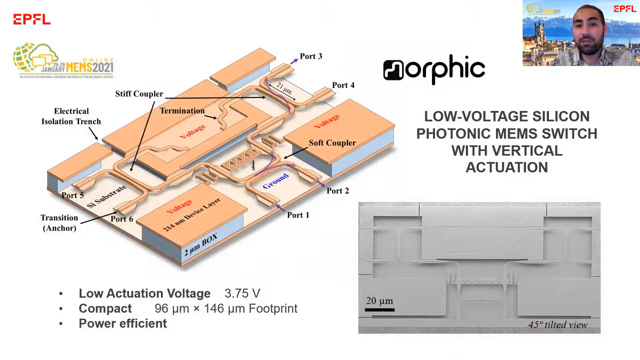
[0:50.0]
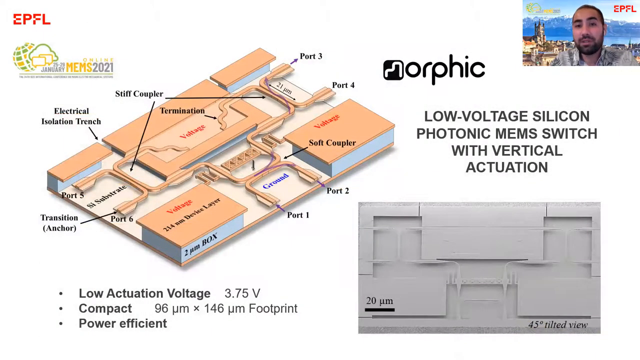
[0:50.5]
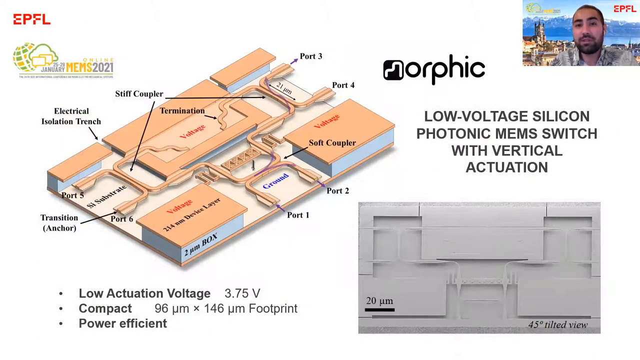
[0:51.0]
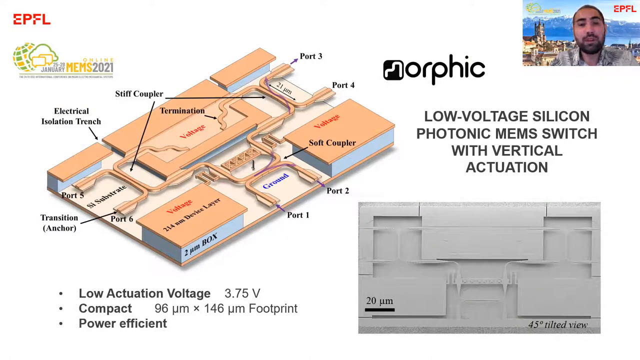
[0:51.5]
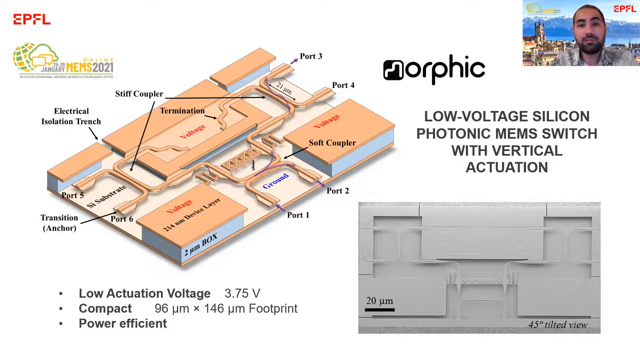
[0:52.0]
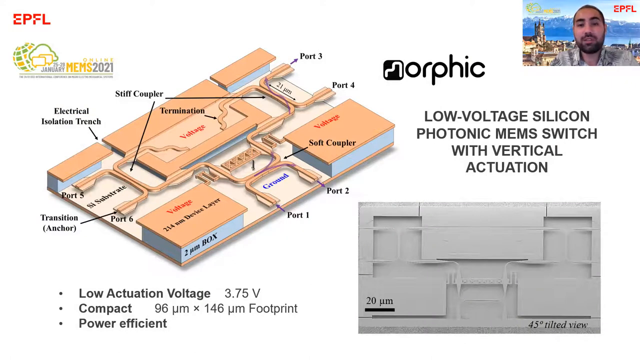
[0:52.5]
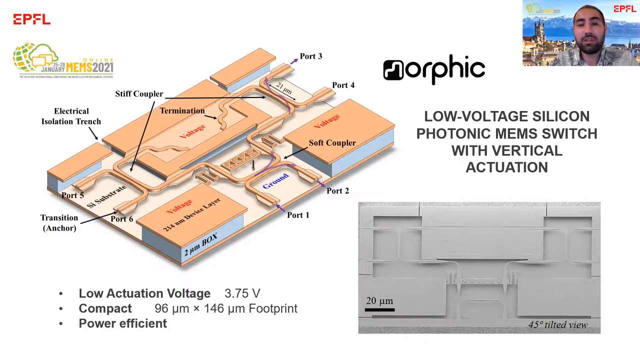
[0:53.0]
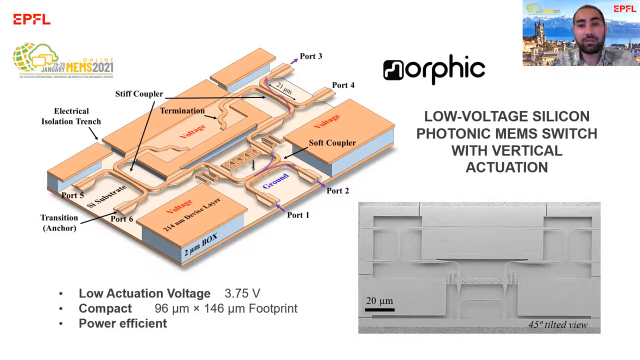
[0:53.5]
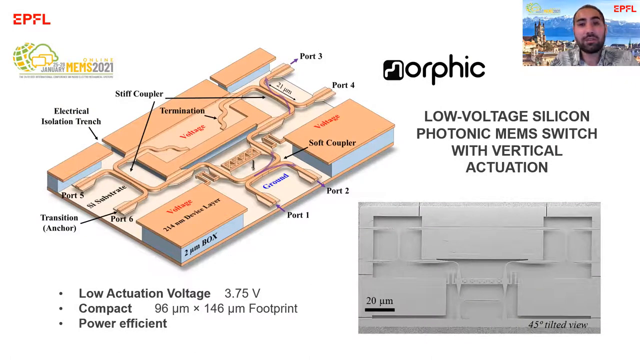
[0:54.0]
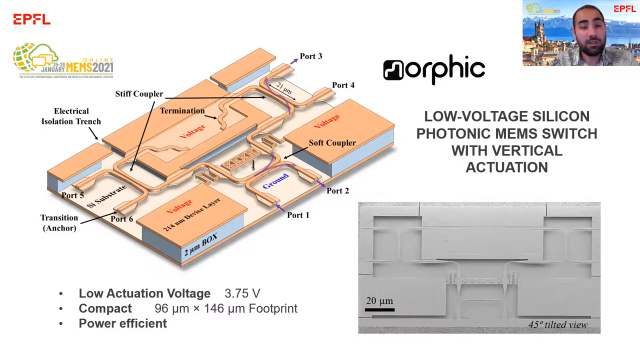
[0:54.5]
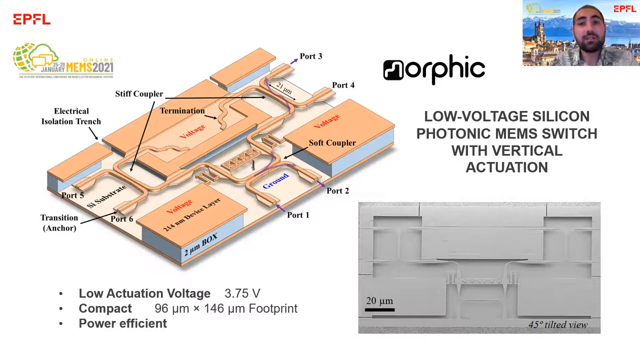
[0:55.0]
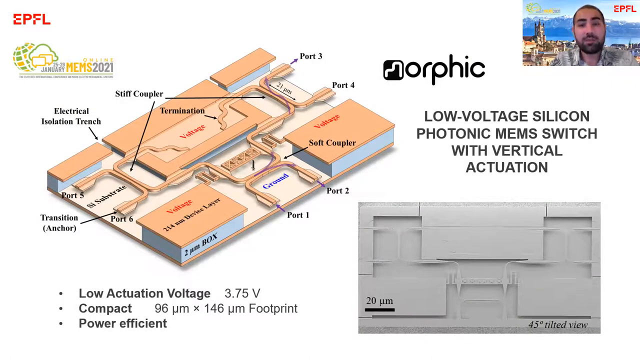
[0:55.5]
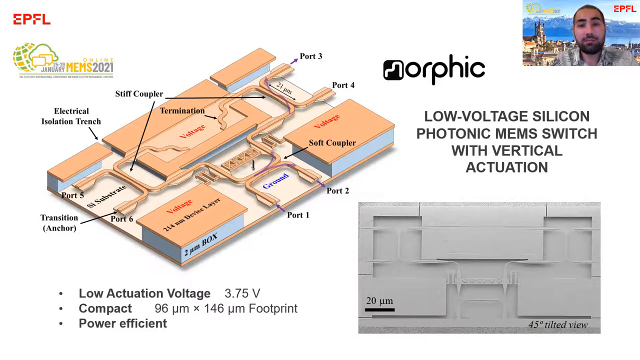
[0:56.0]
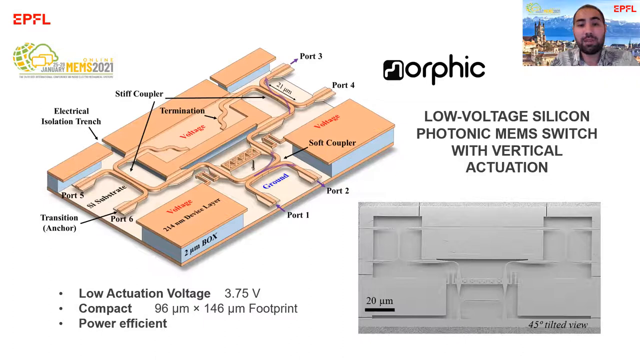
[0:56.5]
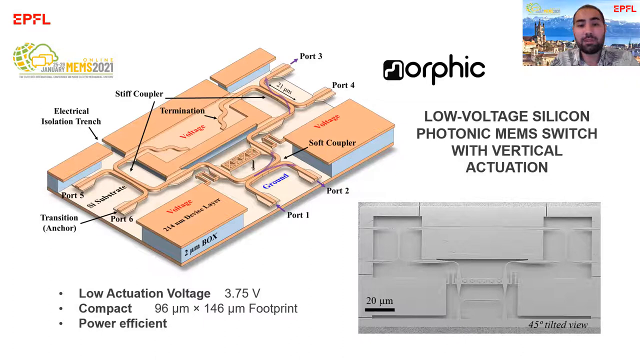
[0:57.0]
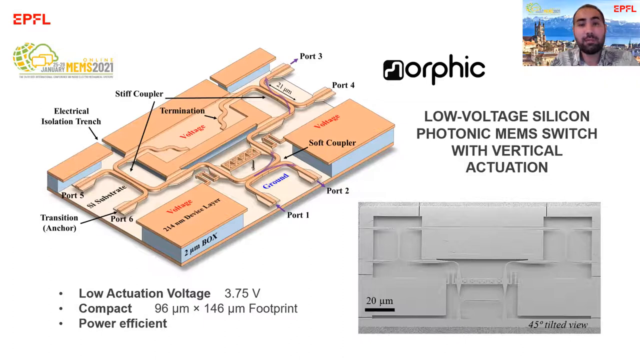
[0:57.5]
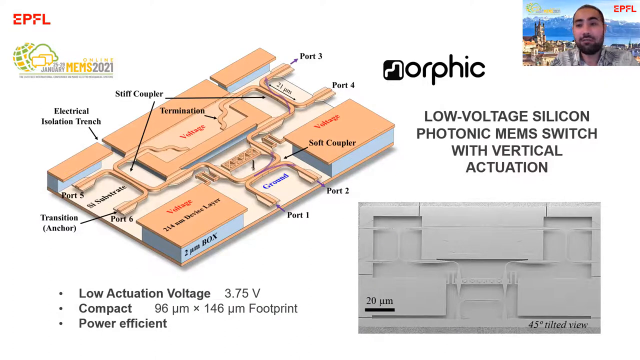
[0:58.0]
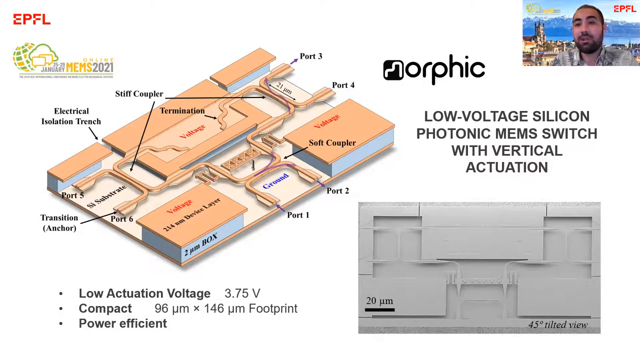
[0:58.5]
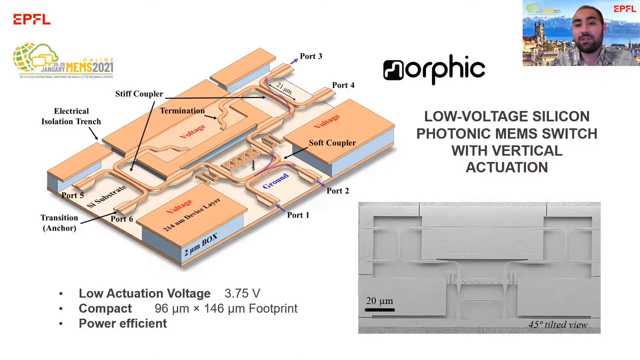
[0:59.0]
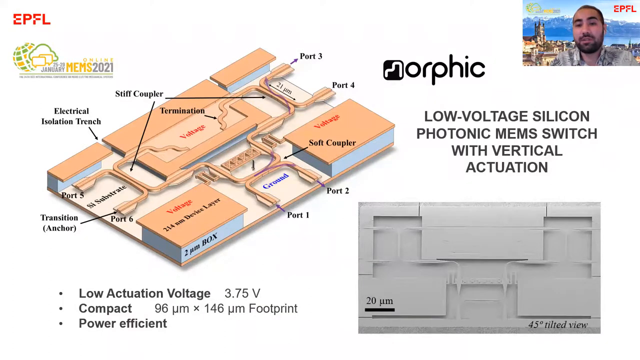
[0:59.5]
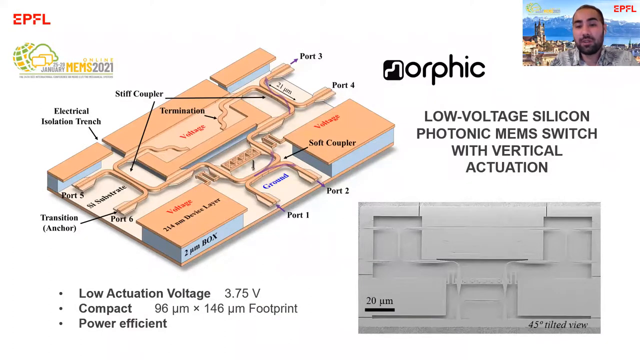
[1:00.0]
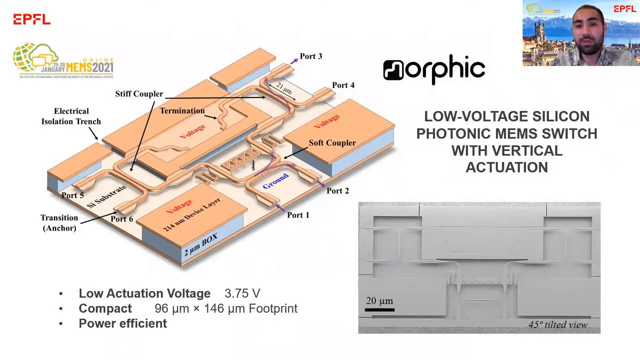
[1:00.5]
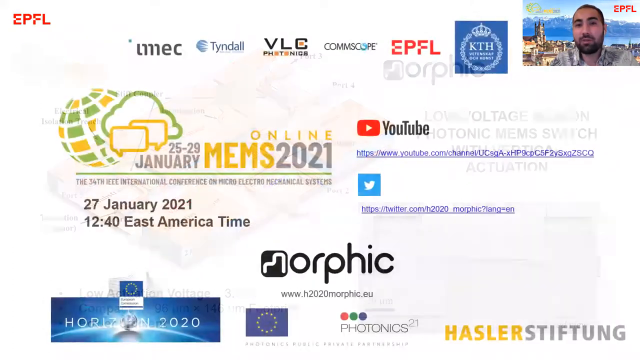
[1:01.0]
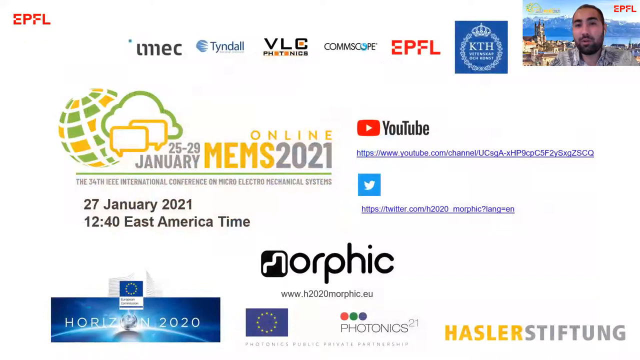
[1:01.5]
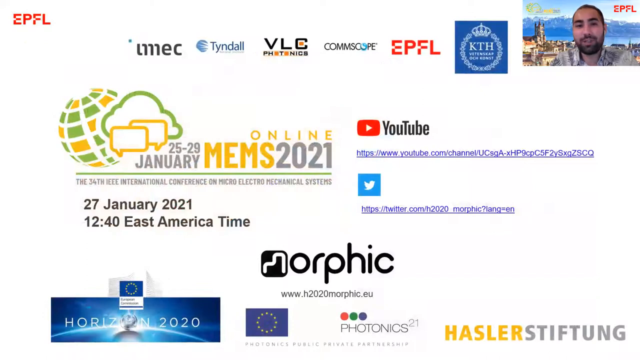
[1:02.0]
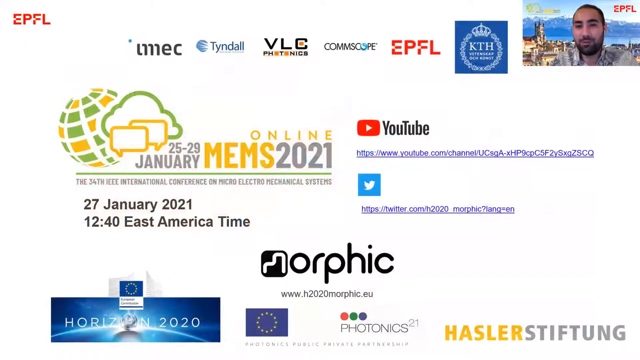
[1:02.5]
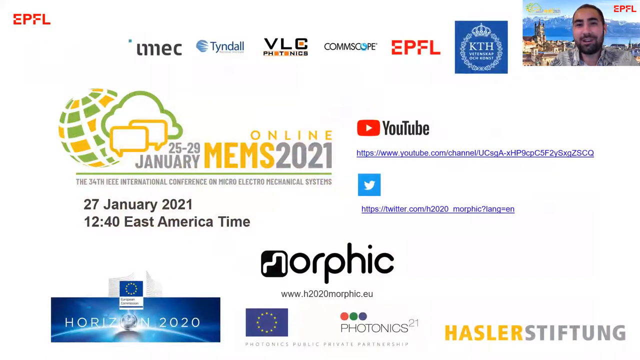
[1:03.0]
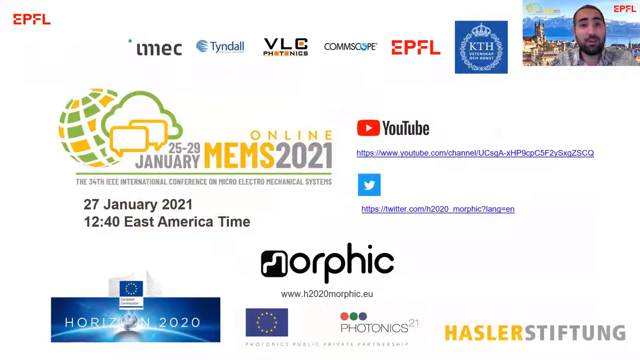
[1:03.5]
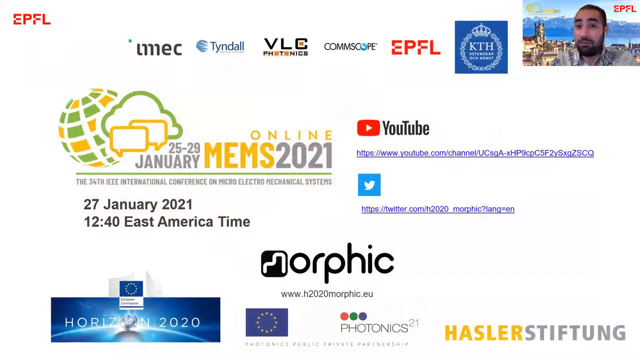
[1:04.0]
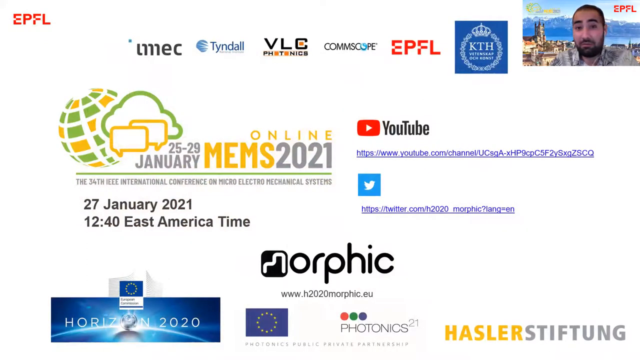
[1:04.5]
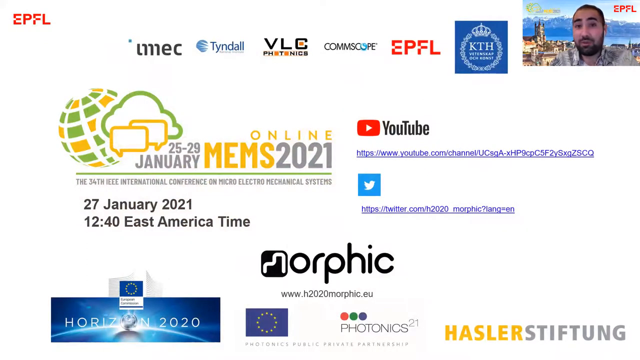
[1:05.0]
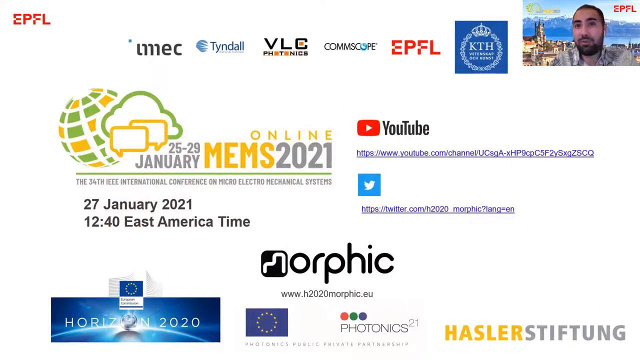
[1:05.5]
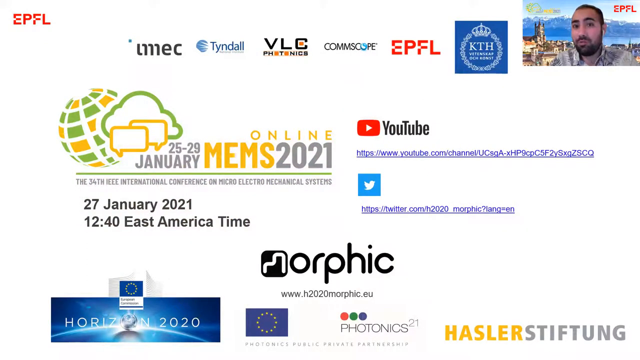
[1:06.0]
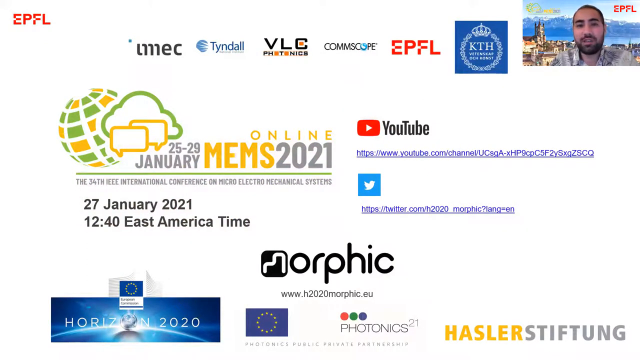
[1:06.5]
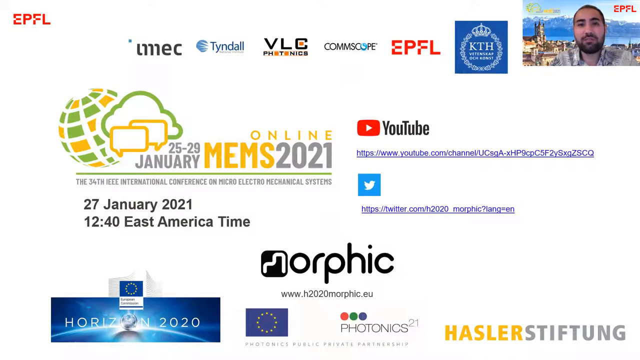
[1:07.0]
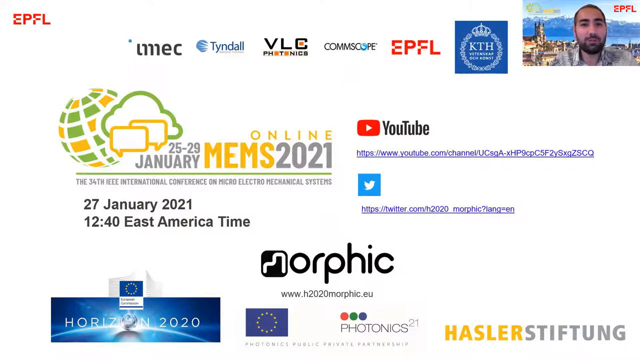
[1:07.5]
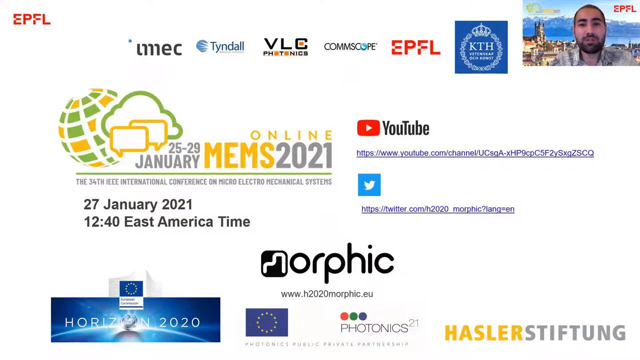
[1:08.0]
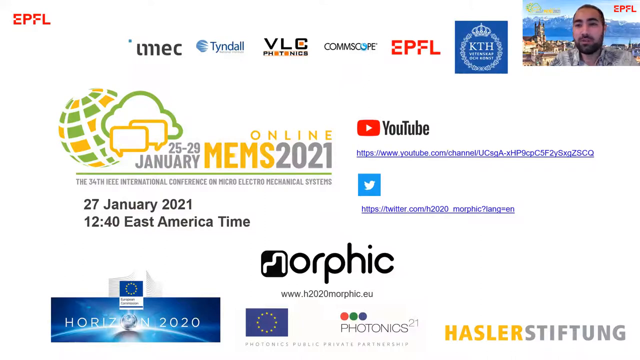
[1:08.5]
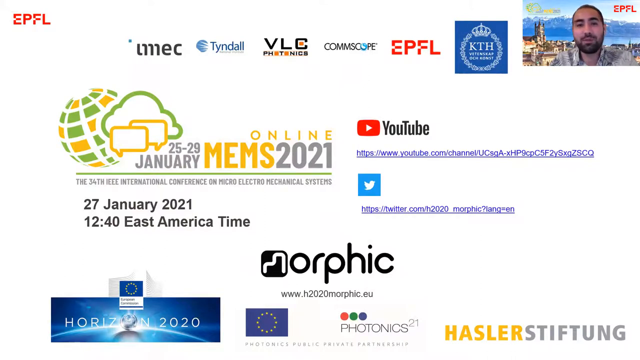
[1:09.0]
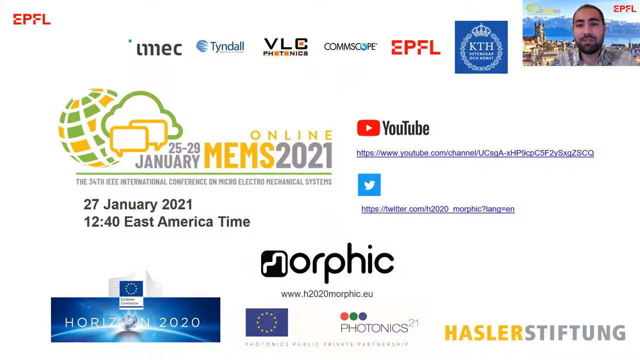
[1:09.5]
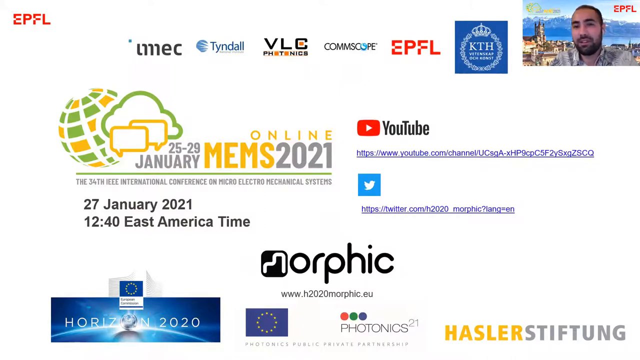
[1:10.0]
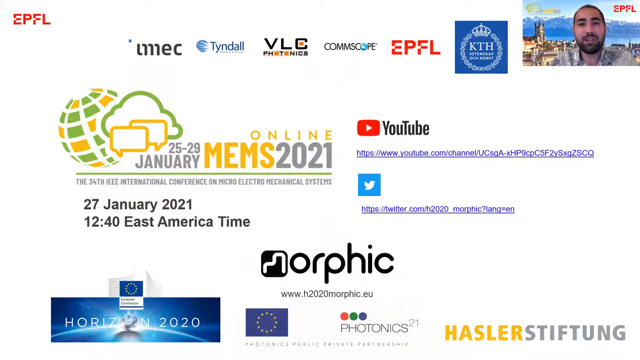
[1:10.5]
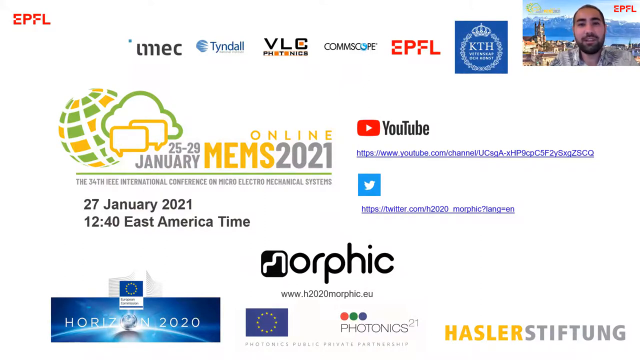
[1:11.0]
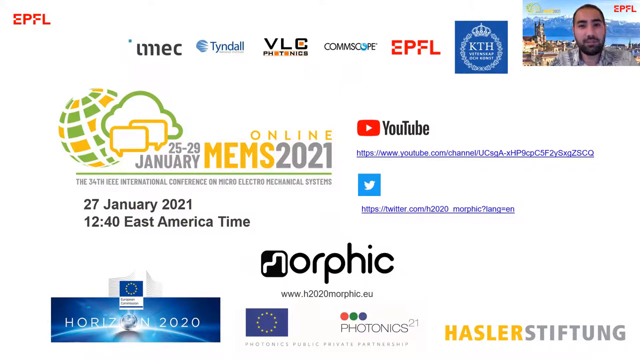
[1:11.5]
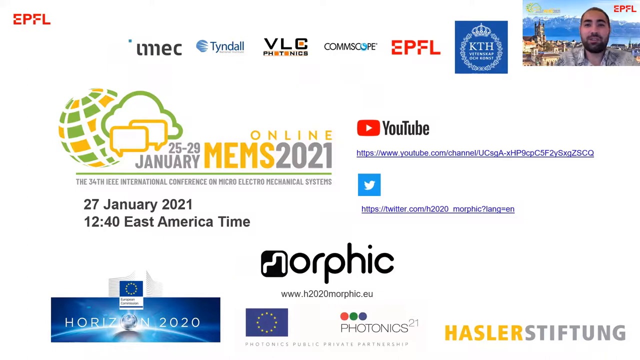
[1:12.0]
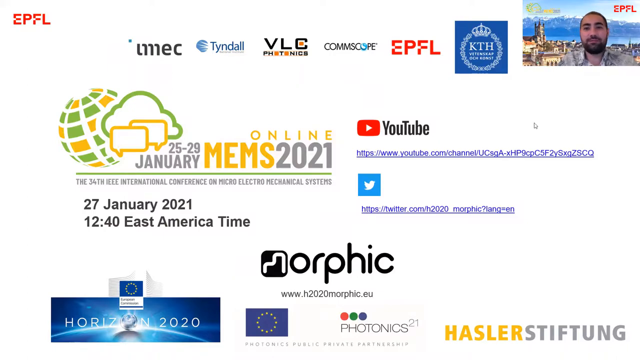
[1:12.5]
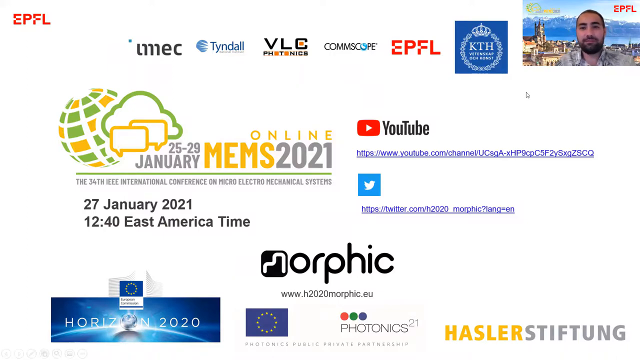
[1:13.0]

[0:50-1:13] He goes through each part of the low-voltage silicon photonic MEMS switch with vertical actuation, which is made of many specific parts: electrical isolation trenches, a stiff coupler, a termination, four different ports and voltage. In the lower left, it shows a low actuation voltage of 3.75 volts. Another view of the same MEMS follows. The screen then changes to show several ways to contact the presenter, including a YouTube channel and a Twitter account, and indicates that everything is made by Morphic, apparently the company the presenter is part of. The presentation for the online MEMS 2021 ends by listing these social platforms where people can find them.